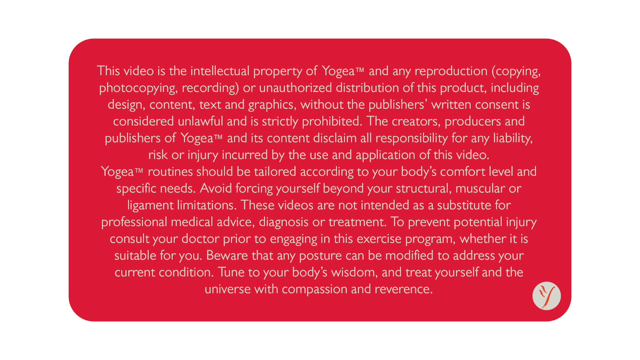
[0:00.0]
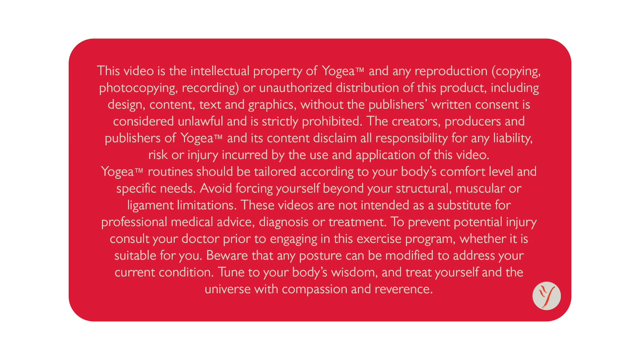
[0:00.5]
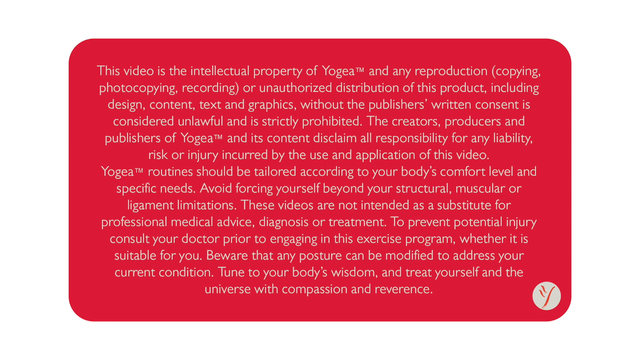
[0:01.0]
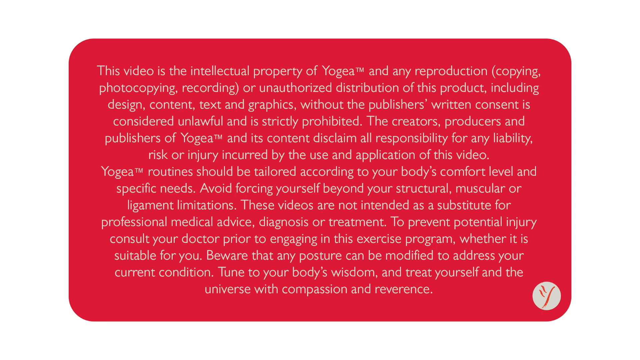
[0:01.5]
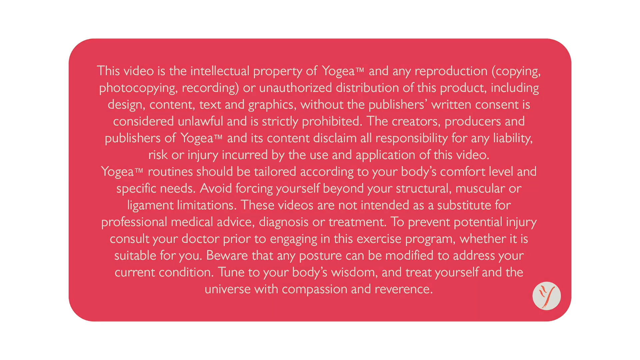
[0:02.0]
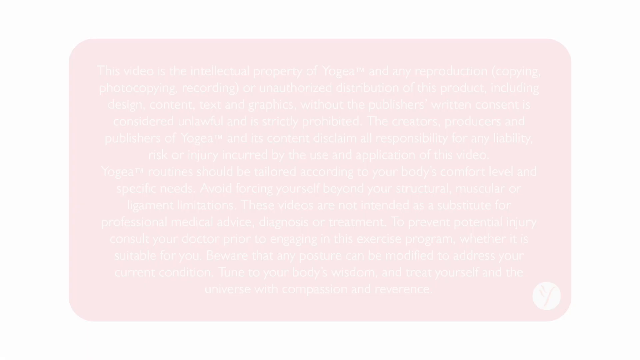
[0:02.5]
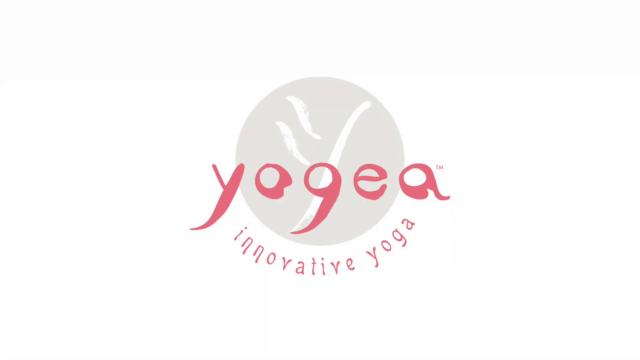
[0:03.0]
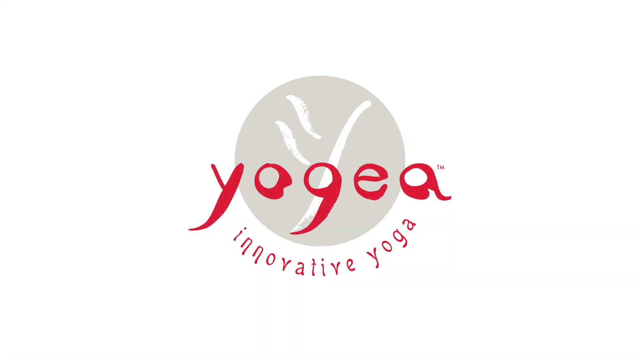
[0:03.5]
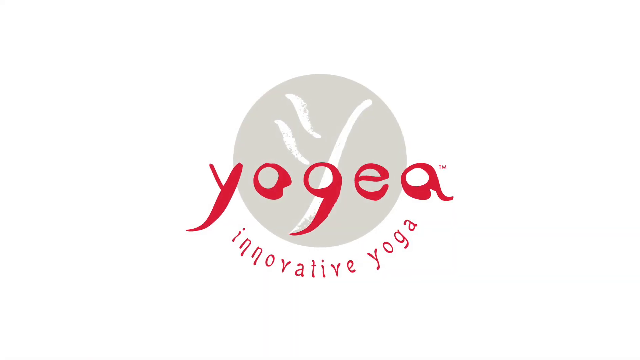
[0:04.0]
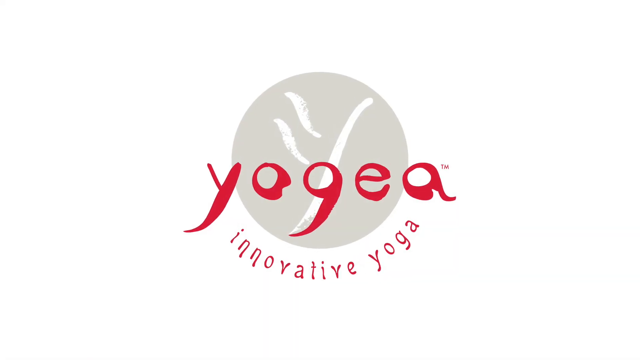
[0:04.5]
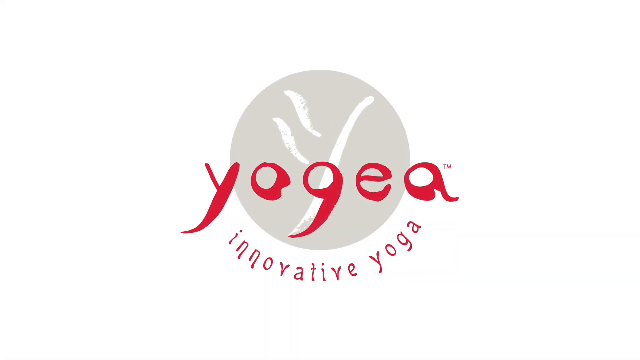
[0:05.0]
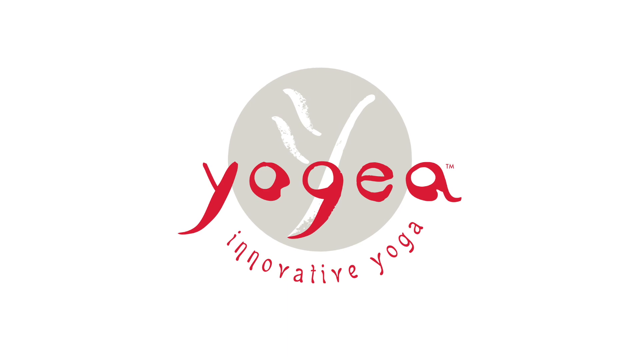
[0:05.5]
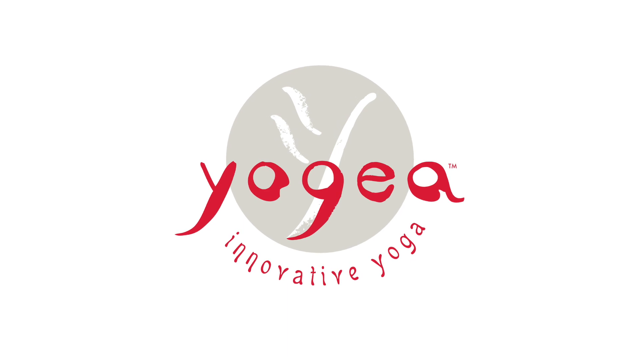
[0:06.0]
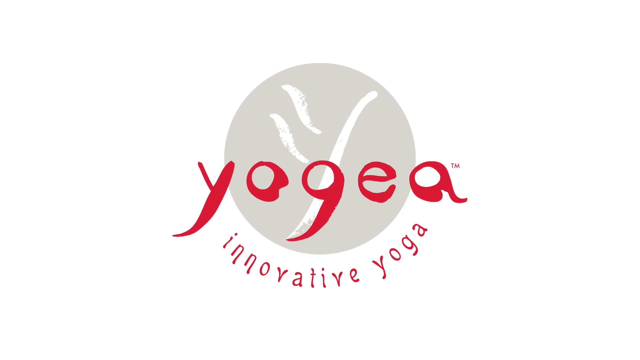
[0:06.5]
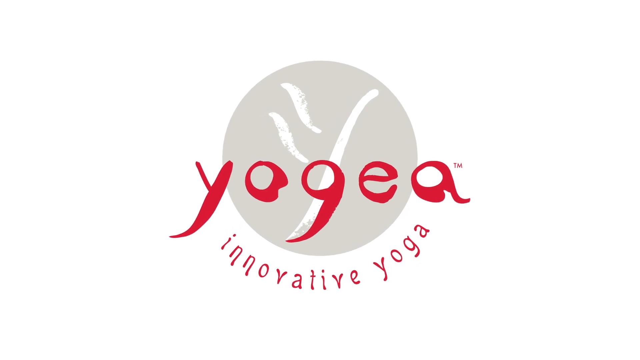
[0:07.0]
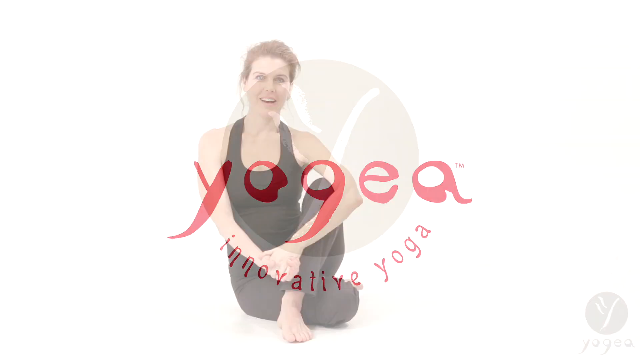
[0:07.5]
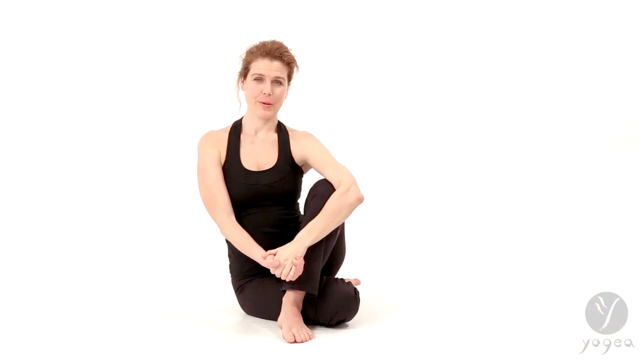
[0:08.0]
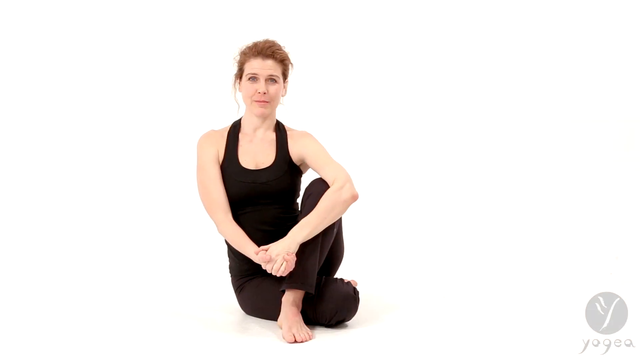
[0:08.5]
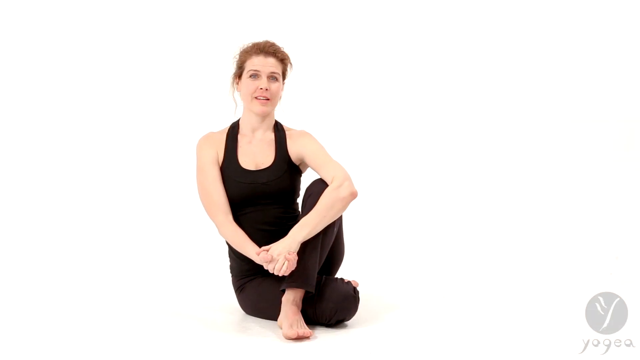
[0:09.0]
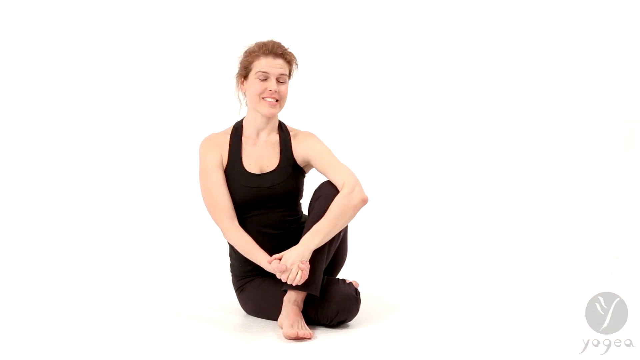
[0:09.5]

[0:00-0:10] The video opens with an intellectual property paragraph on a red background, confirming the property of the creators, producers and publishers of Yogea. A title page follows, with a grey circle on a white background. The circle carries a Y-shaped design with an extra short line above the short line of the Y. The title "Yogea" in red letters goes through the circle from left to right, with the words "Innovative Yoga" around the bottom of the circle. A woman then appears in a sitting position. Her right leg is bent over her left leg, and her left leg goes around to the back of her right leg near her hip. Her brown hair is tied up. She wears brown or black yoga trousers and a top. Her hands are clasped together in front of her leg, and her right elbow hugs her right knee. She talks to the camera and smiles as she speaks.